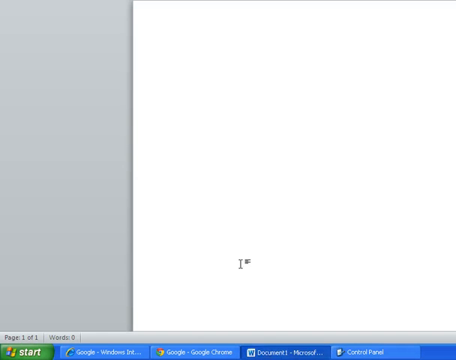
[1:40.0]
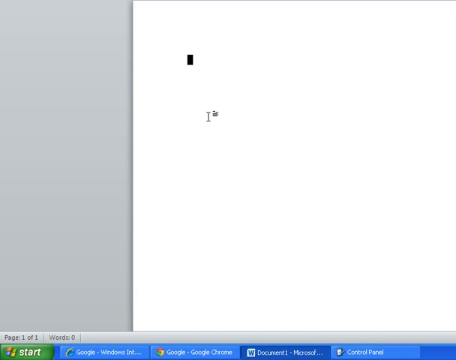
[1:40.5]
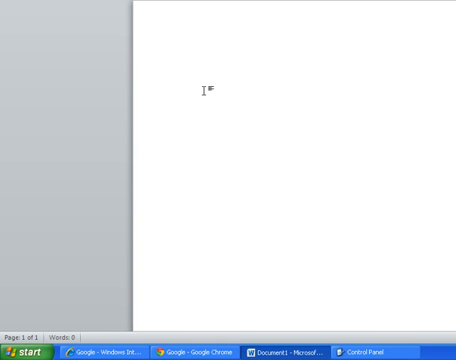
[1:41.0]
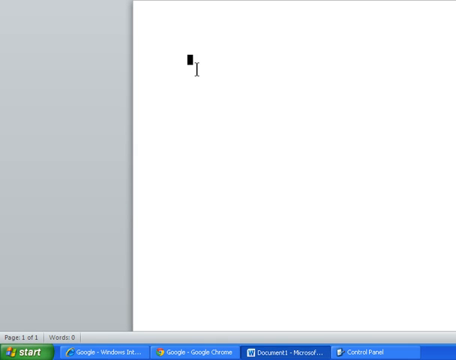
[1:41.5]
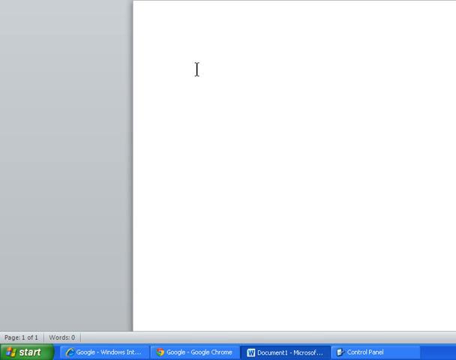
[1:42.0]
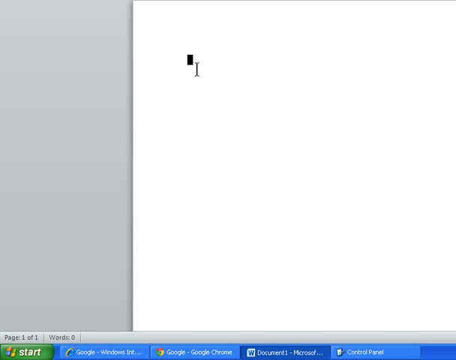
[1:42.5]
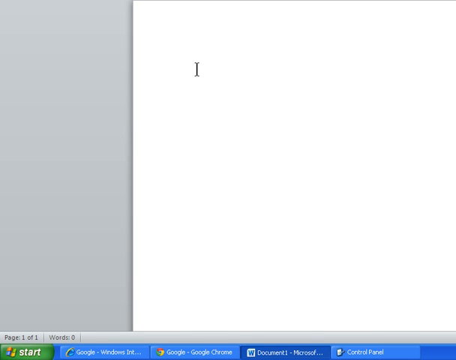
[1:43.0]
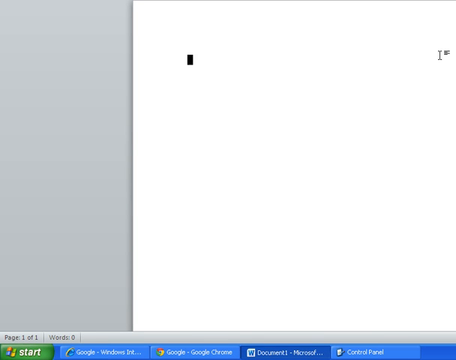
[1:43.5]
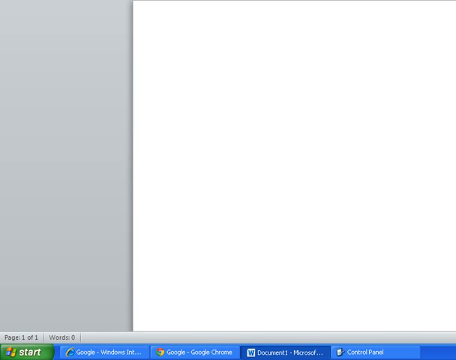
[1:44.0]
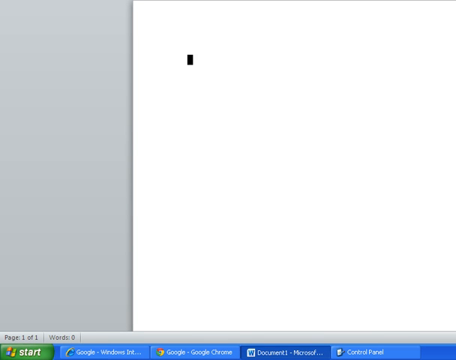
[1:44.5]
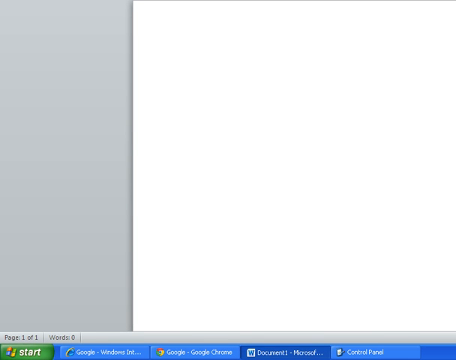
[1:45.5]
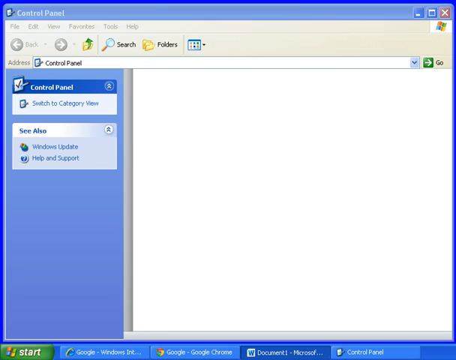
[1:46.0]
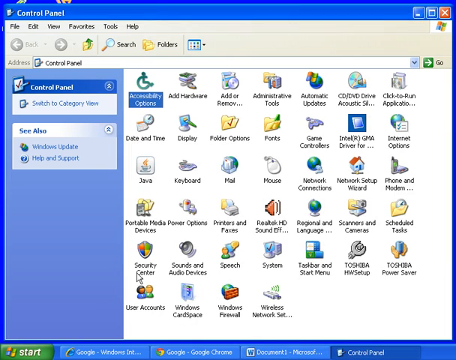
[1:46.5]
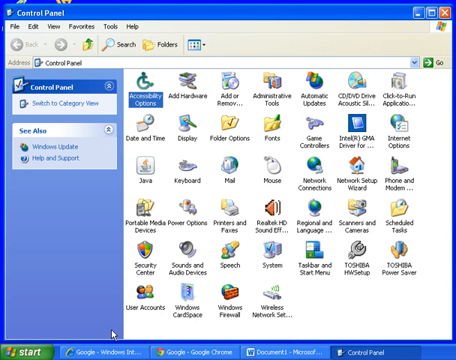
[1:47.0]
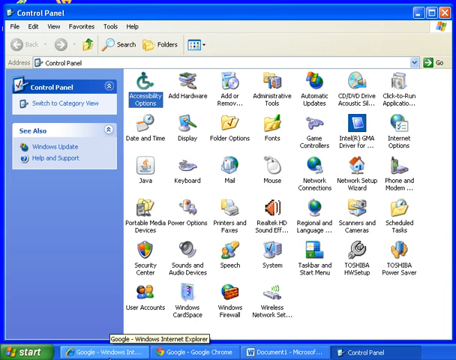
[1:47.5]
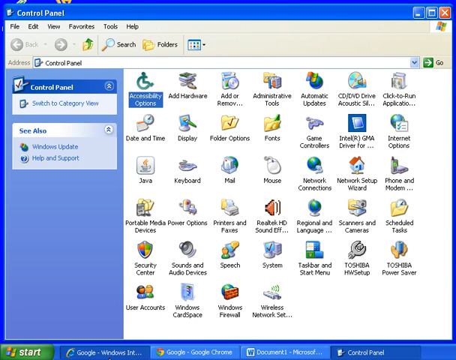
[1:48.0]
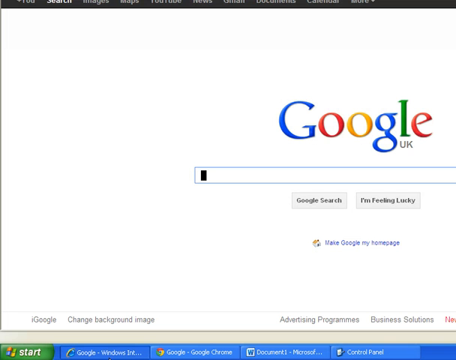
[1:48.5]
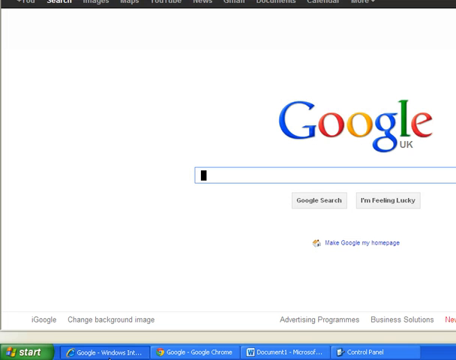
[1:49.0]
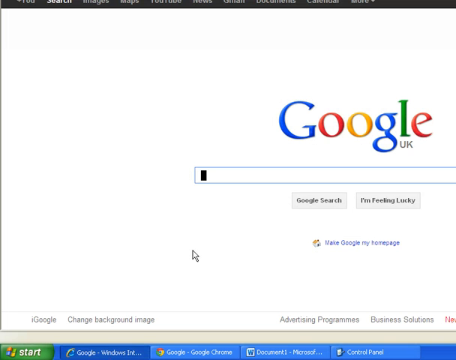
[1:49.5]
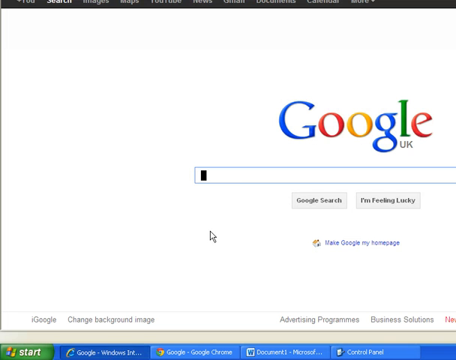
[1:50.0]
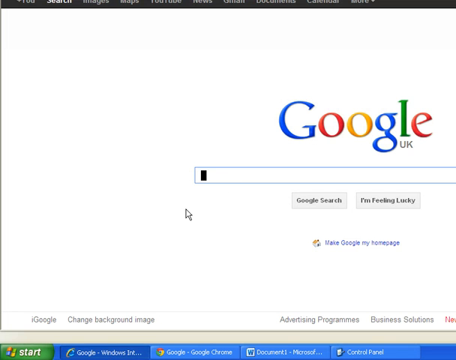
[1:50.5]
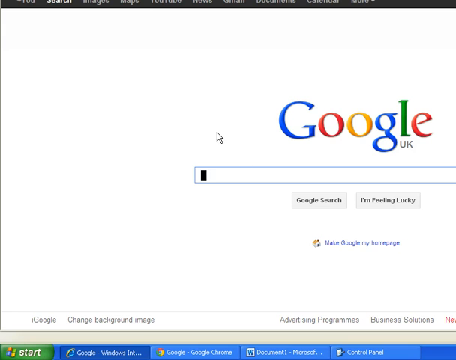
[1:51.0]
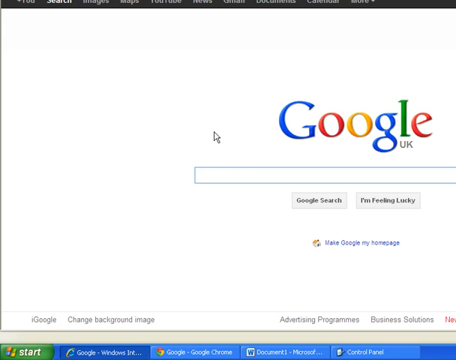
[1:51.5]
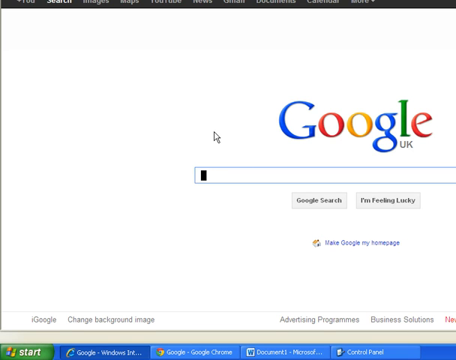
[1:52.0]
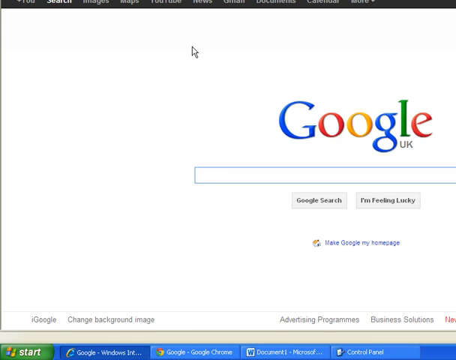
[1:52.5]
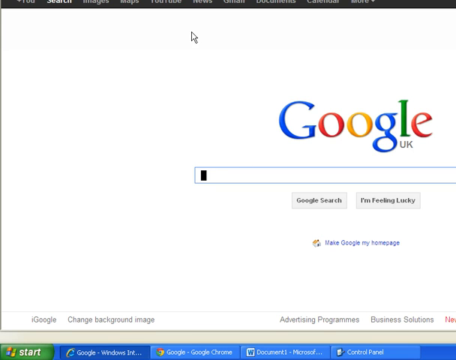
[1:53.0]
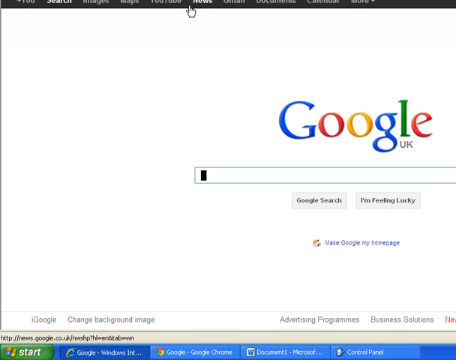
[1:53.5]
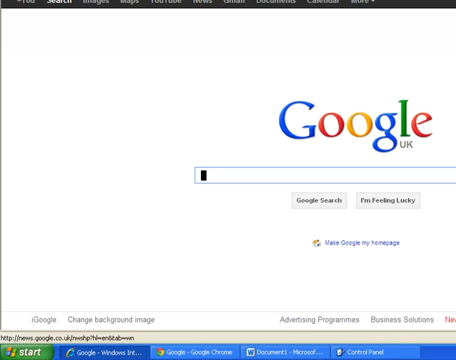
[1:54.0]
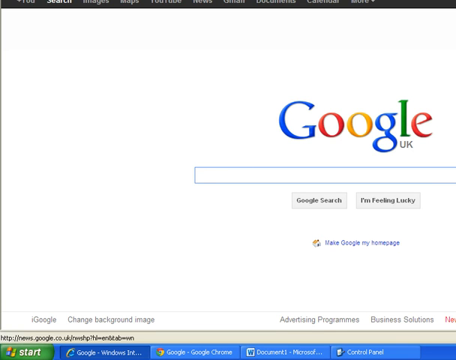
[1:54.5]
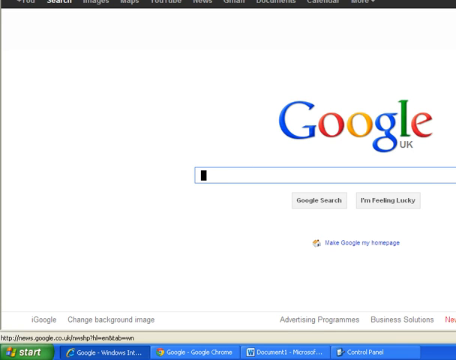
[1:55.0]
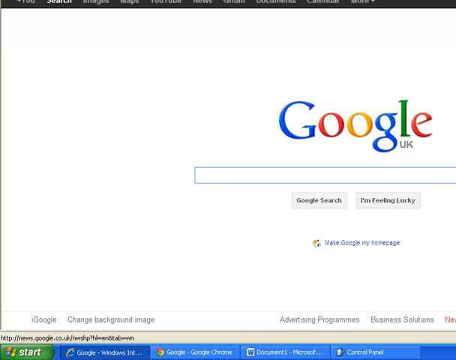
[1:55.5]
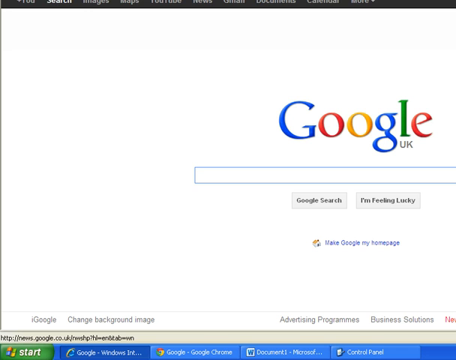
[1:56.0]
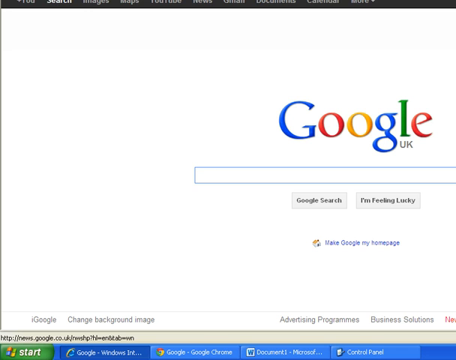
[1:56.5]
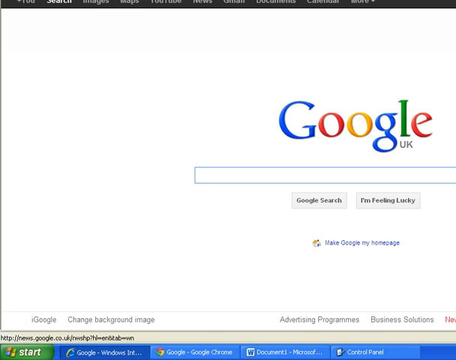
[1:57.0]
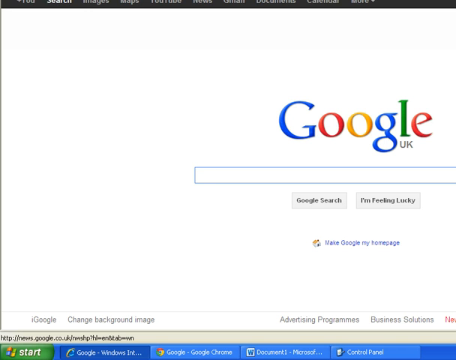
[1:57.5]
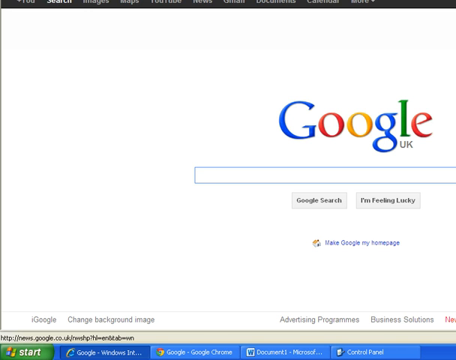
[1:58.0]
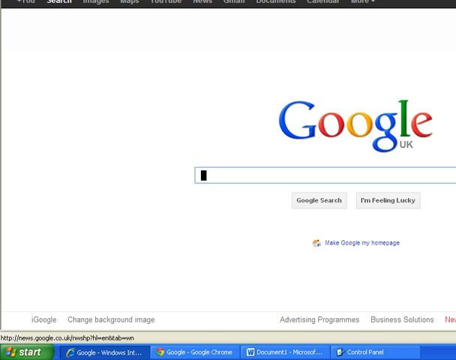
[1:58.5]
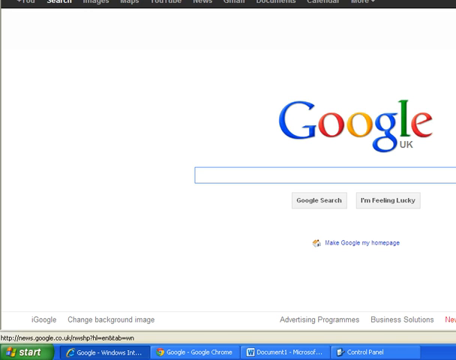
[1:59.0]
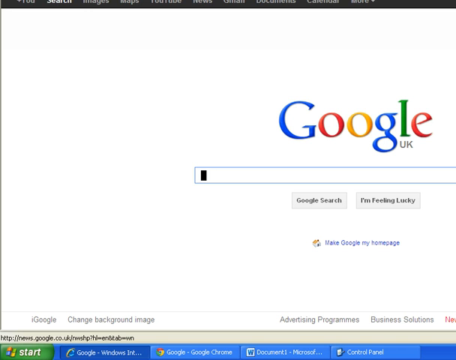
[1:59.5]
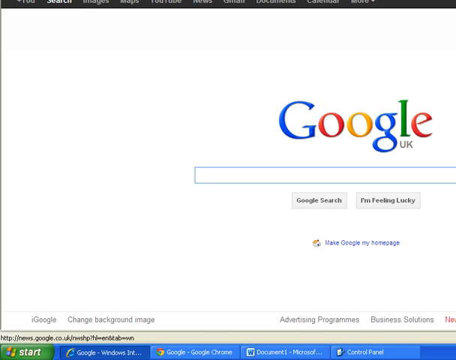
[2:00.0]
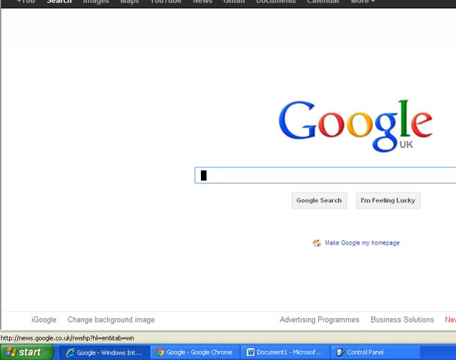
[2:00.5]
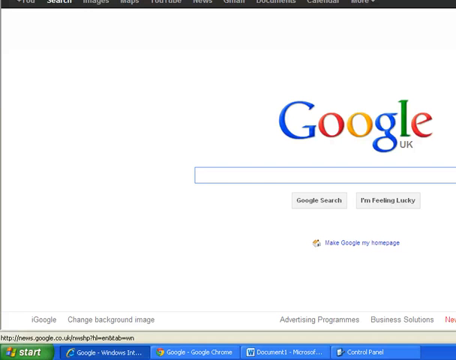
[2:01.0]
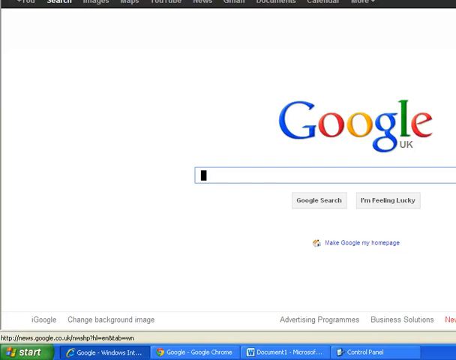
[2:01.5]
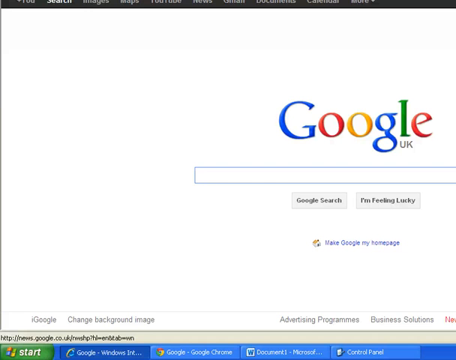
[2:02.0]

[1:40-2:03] A blank page is open on the computer, with the cursor in it as if the user is about to type something, but nothing is typed. Then the control panel page appears with many options, and the accessibility options icon is highlighted, as if about to be clicked. Next a Google page appears that says "Google UK", with the cursor blinking in the search bar as if about to search, but nothing is typed and nothing happens.